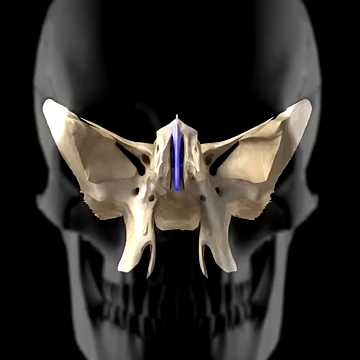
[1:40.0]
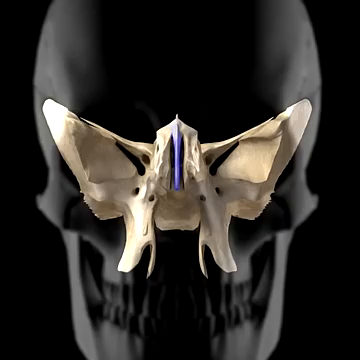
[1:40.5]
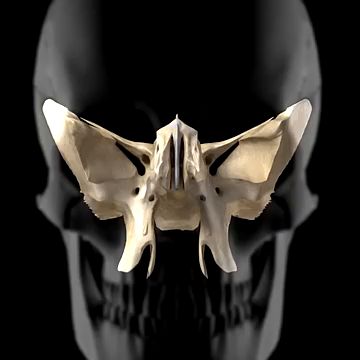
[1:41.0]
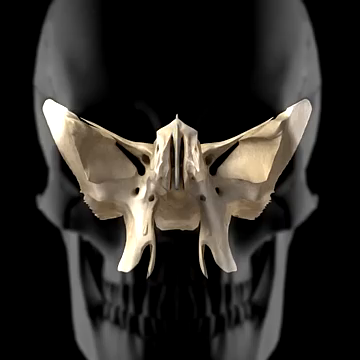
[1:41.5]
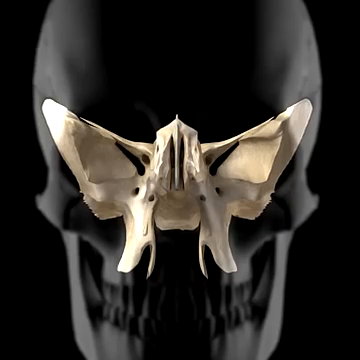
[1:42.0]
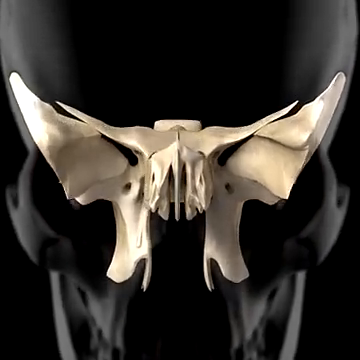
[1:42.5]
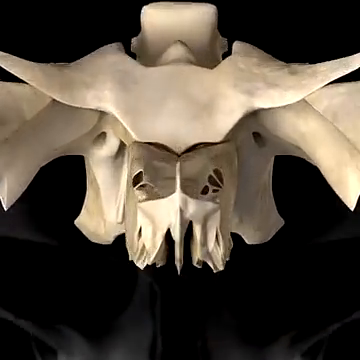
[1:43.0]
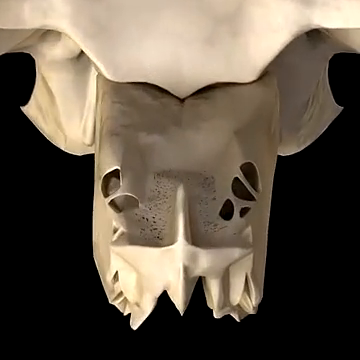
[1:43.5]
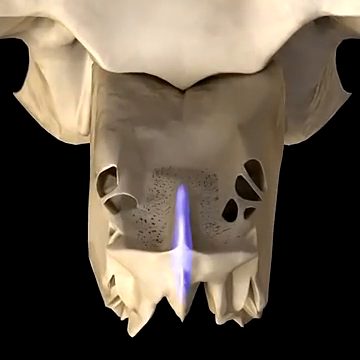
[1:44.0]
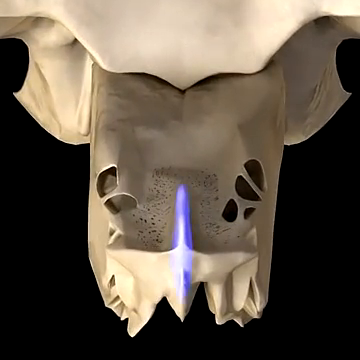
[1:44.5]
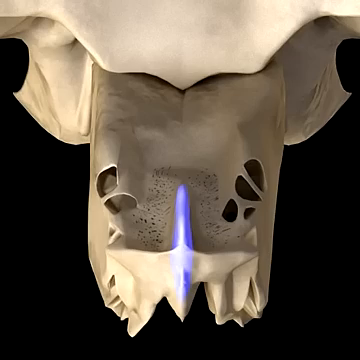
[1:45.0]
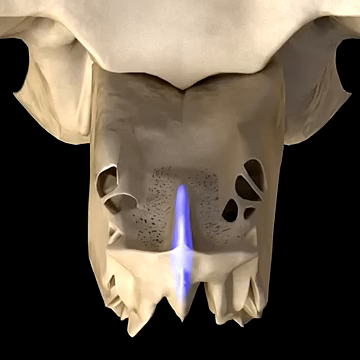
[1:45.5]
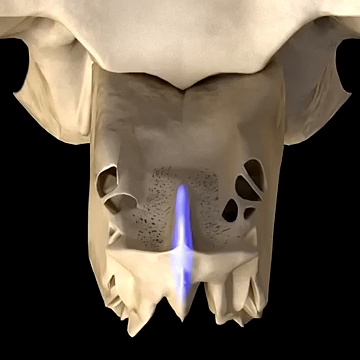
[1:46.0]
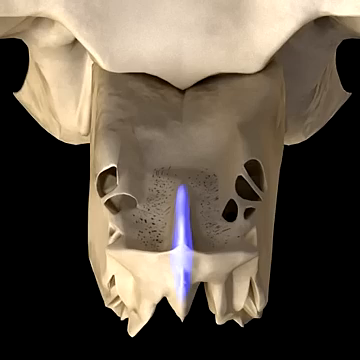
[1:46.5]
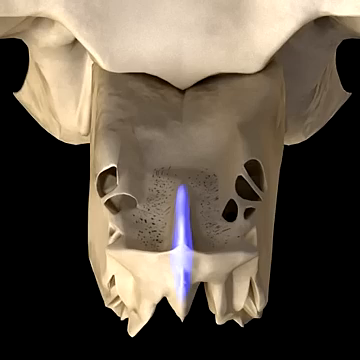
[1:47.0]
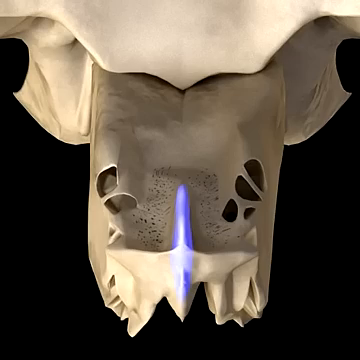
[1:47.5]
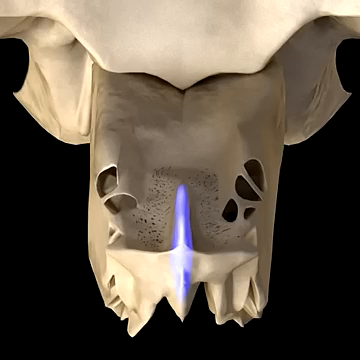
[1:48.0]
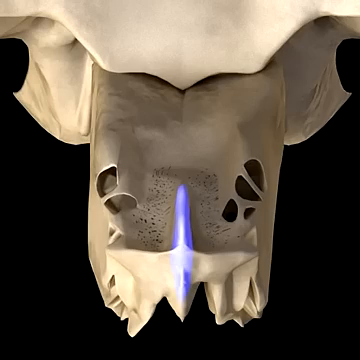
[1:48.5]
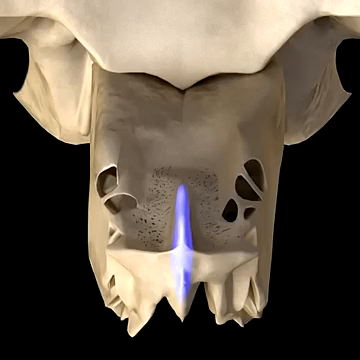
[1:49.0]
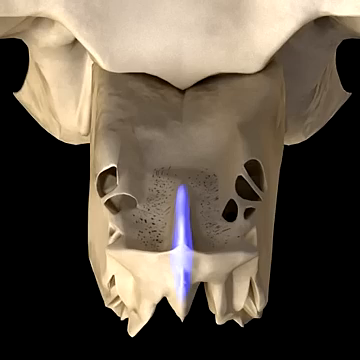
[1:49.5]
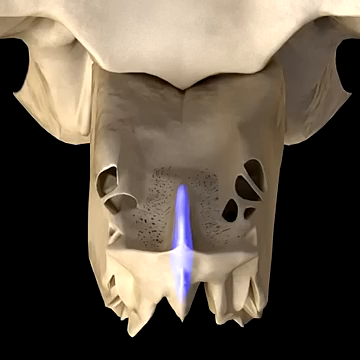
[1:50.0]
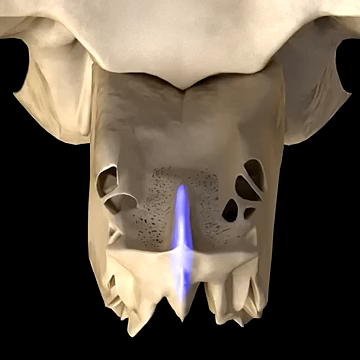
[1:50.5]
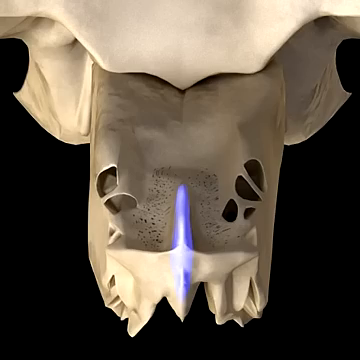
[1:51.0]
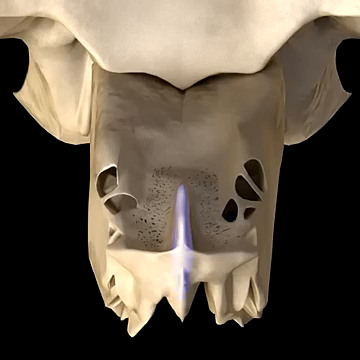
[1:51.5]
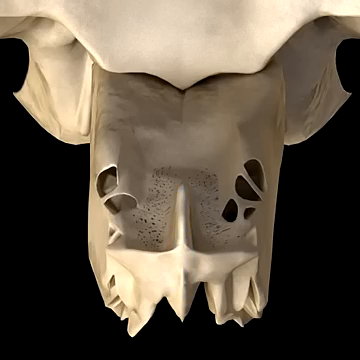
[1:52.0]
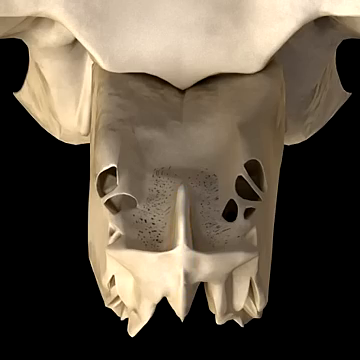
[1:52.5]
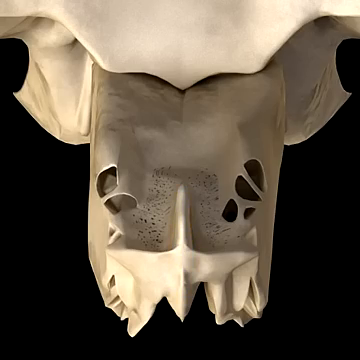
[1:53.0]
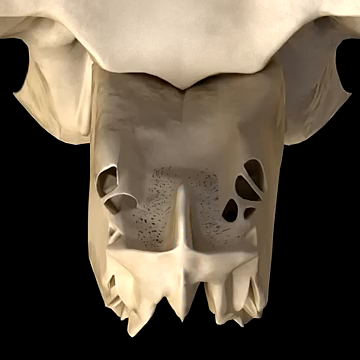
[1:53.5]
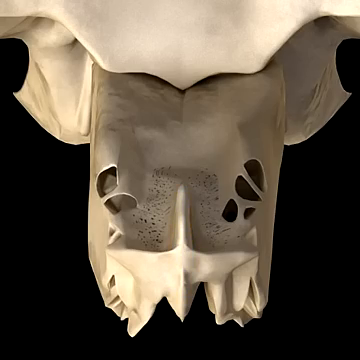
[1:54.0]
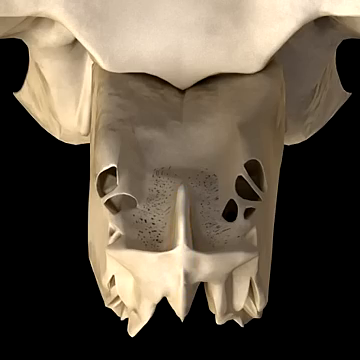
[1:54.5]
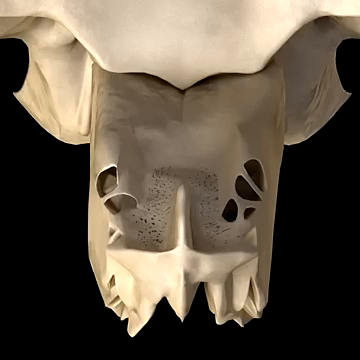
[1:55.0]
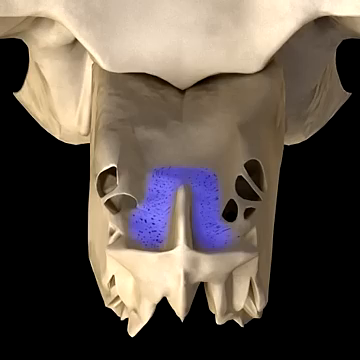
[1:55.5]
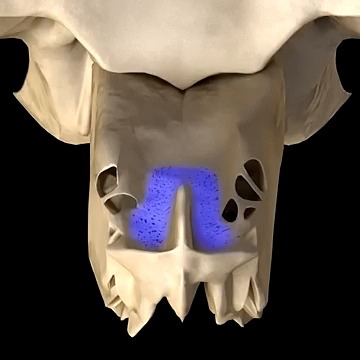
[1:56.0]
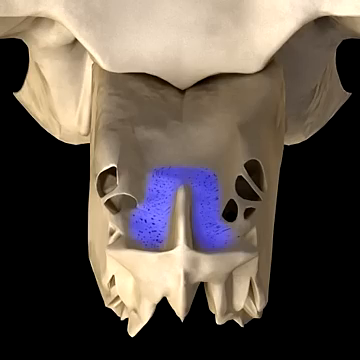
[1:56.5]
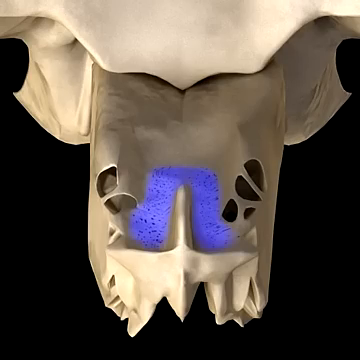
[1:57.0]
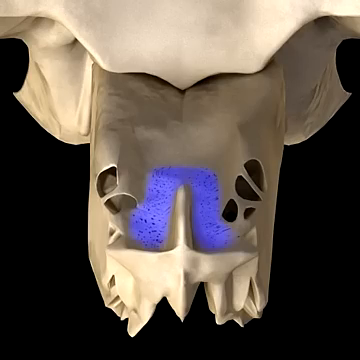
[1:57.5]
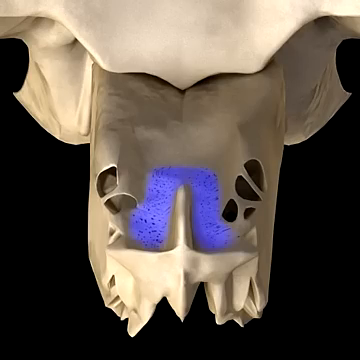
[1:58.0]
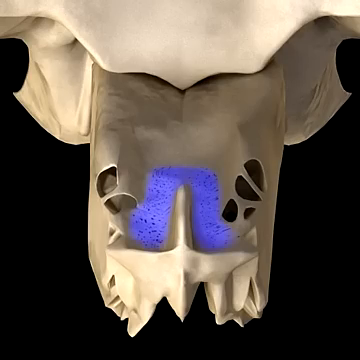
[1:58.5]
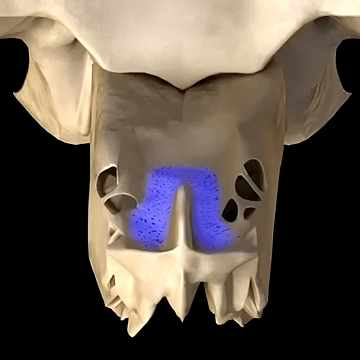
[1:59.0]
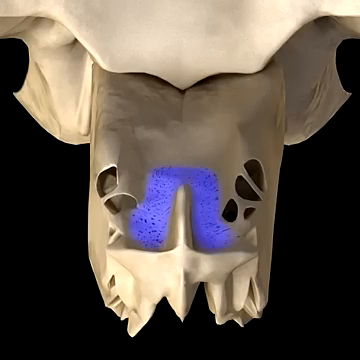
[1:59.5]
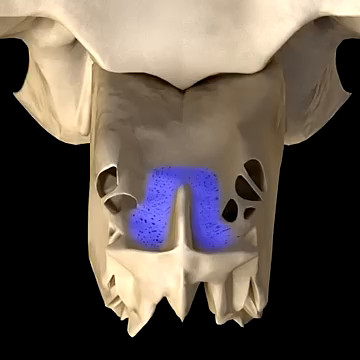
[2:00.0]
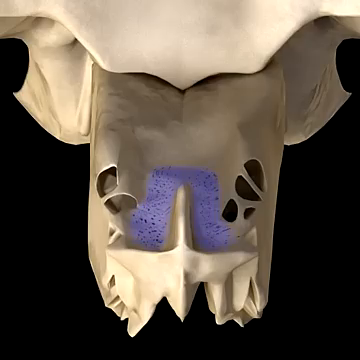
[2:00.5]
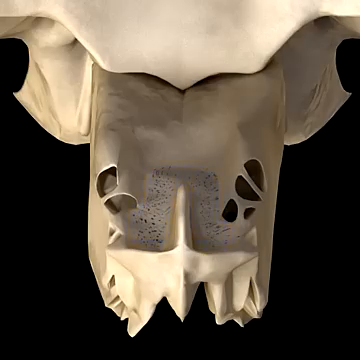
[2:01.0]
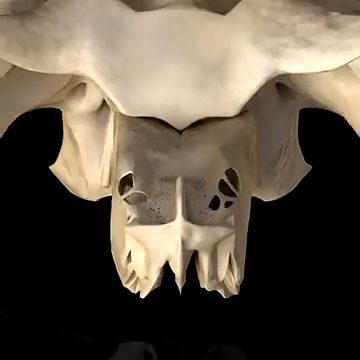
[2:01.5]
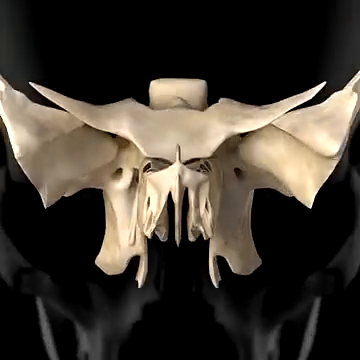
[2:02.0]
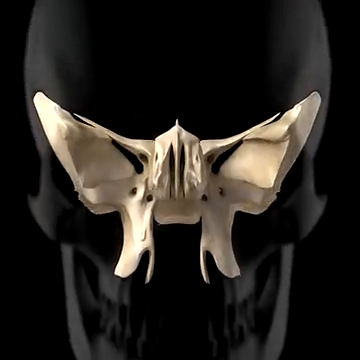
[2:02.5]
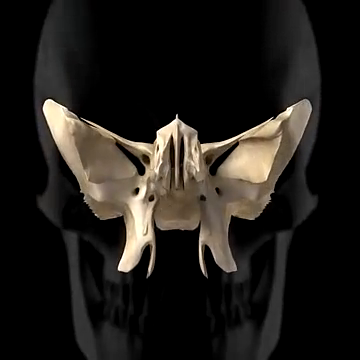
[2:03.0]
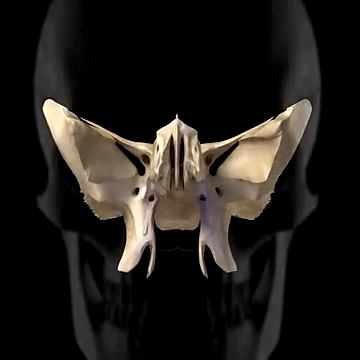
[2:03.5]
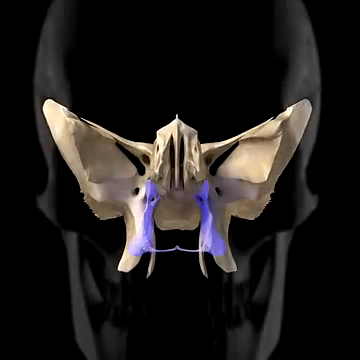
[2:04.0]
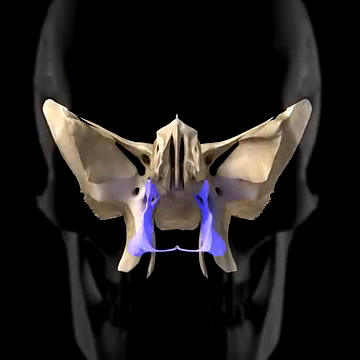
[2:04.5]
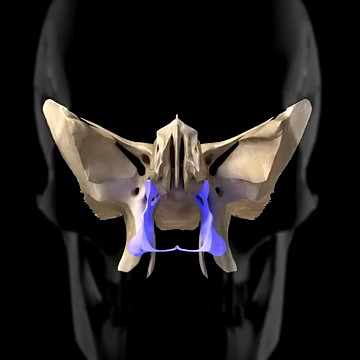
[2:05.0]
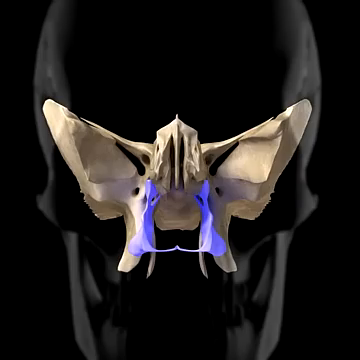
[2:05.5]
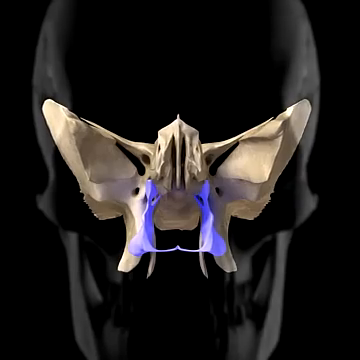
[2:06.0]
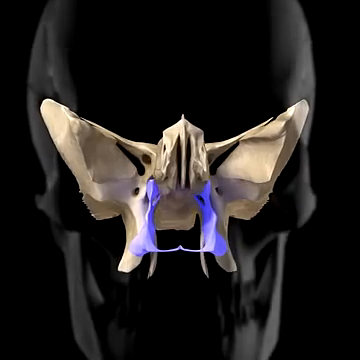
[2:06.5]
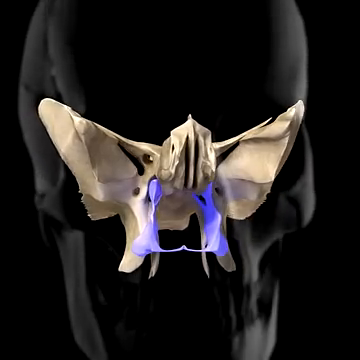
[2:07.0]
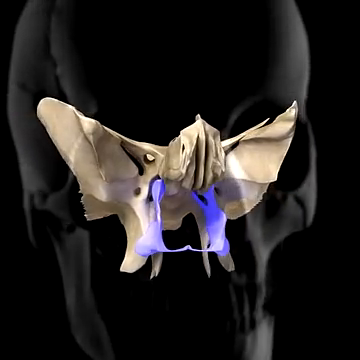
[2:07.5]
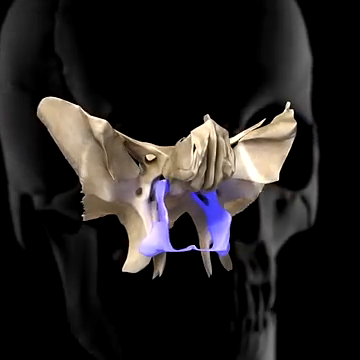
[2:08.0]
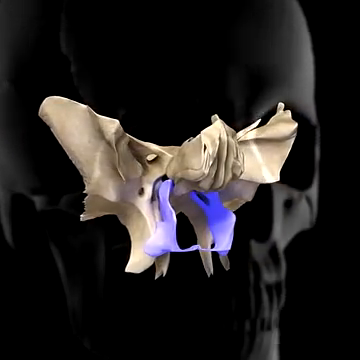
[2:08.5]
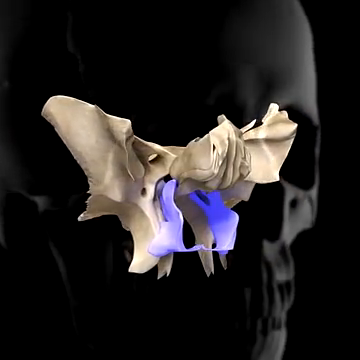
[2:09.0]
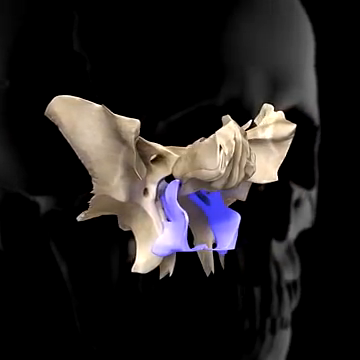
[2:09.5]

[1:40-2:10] The white butterfly bone is in the center of the screen, with a zoomed-in gray skull as the background sitting behind it. The center vertical bone of the butterfly bone is highlighted in purple. The purple fades away, and the butterfly bone and skull background suddenly tilt forward and zoom in extremely closely, showing fine detail of the top of the butterfly bone. A hole in the center bottom of the butterfly bone is highlighted in light purple. The vertical piece at the very front center of the bone is highlighted in purple, then the highlight goes away and the bone is white again. Next, the bone next to and surrounding the center vertical piece turns purple, highlighting the little dots and fissures in the bone. The bone then animates back to where it started, and the bottom half of the front of the butterfly bone is highlighted in purple, as if showing where another bone might fit into it or where a cavity might be.